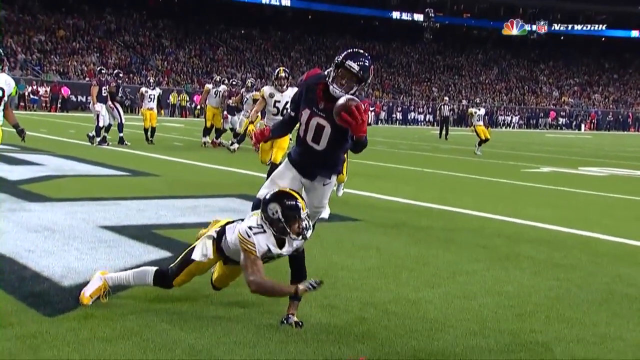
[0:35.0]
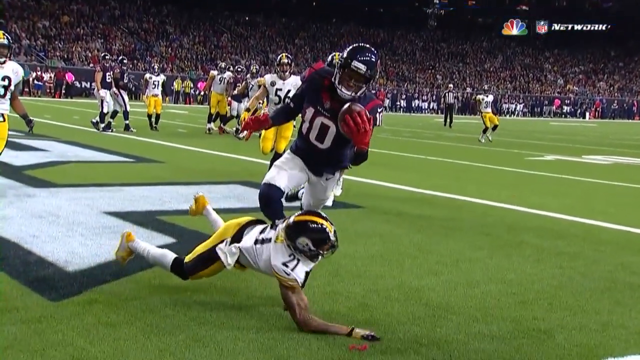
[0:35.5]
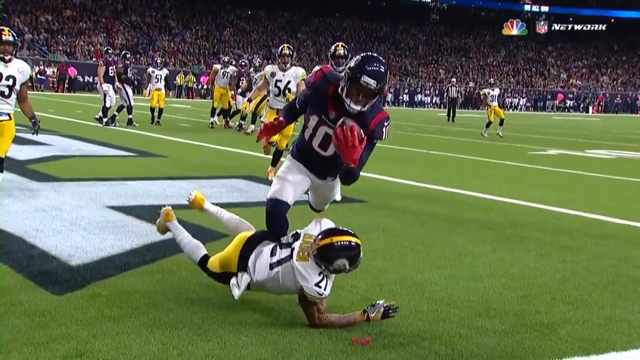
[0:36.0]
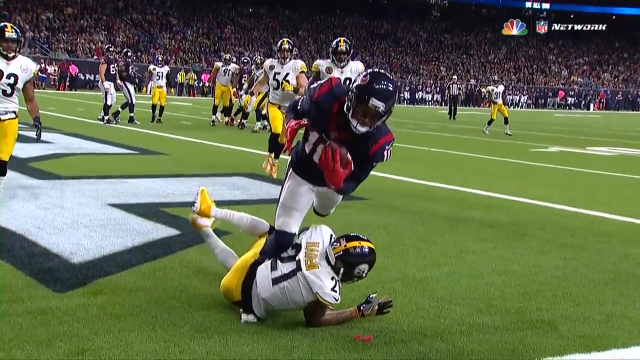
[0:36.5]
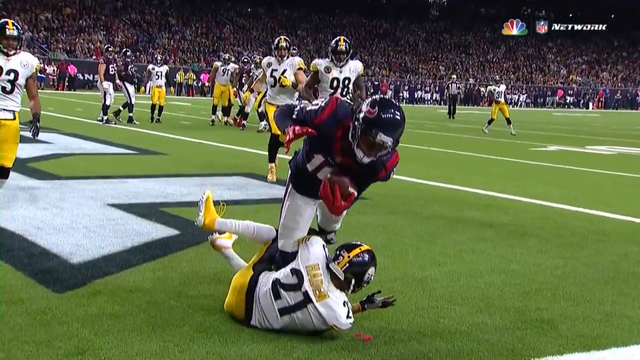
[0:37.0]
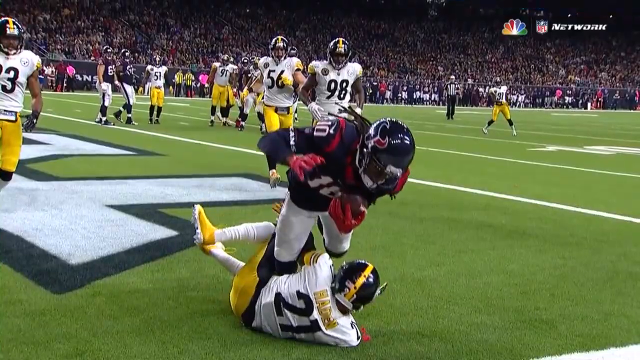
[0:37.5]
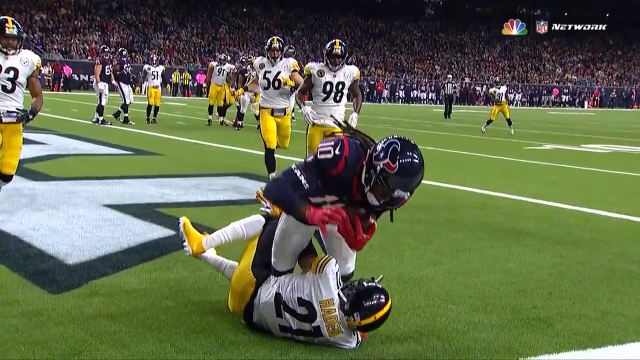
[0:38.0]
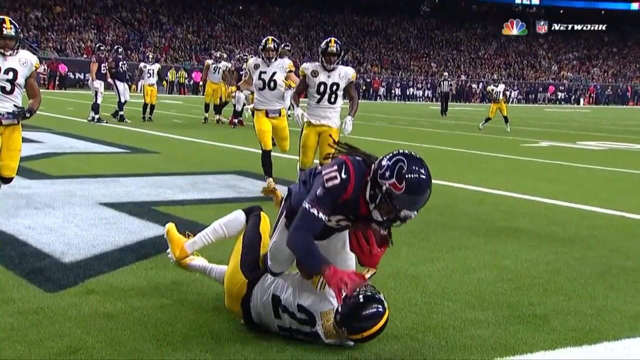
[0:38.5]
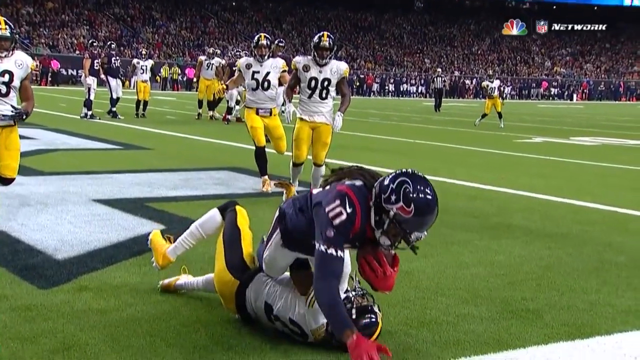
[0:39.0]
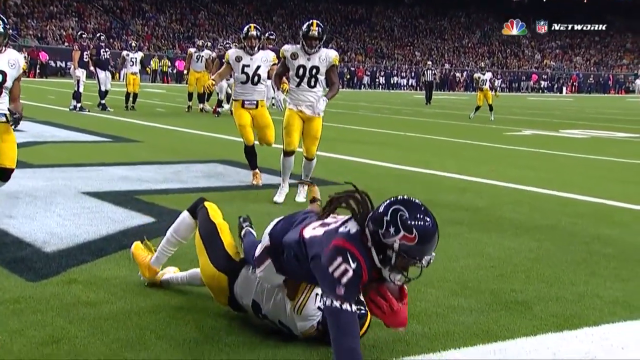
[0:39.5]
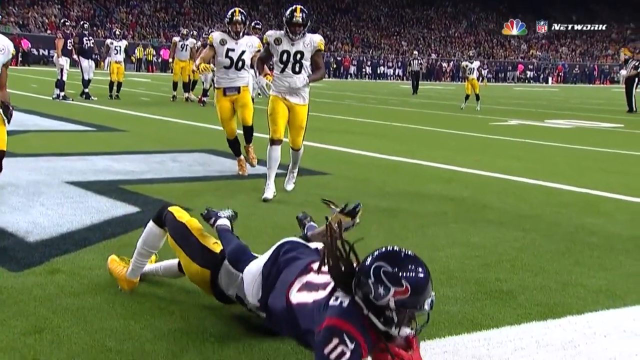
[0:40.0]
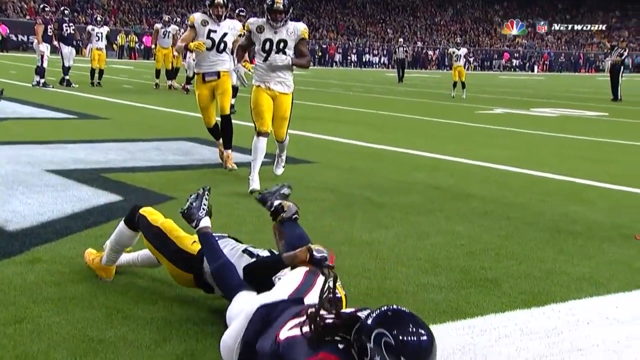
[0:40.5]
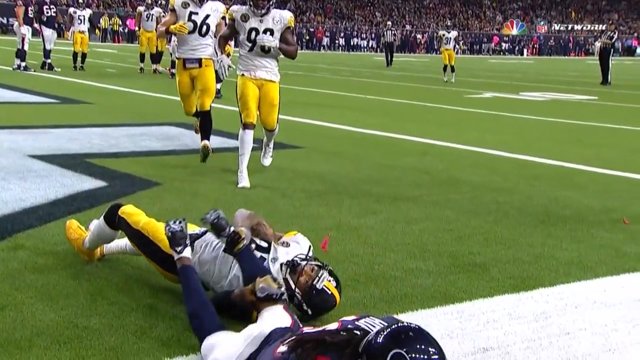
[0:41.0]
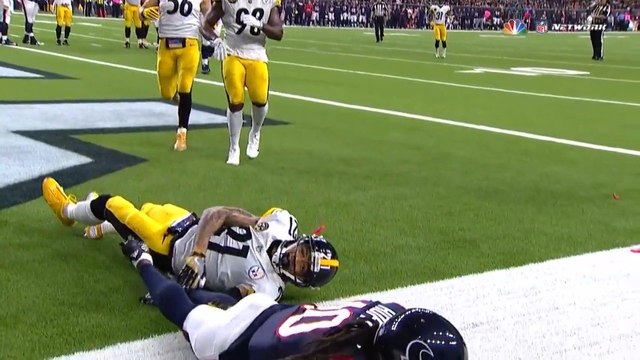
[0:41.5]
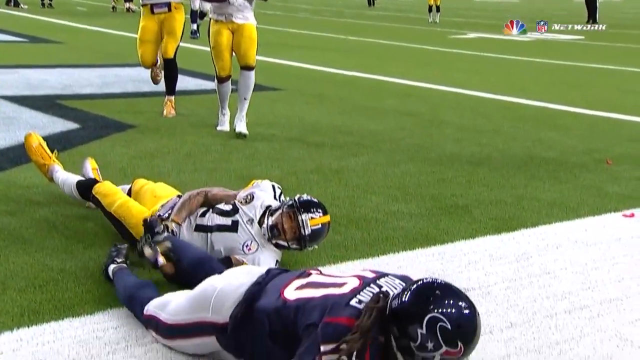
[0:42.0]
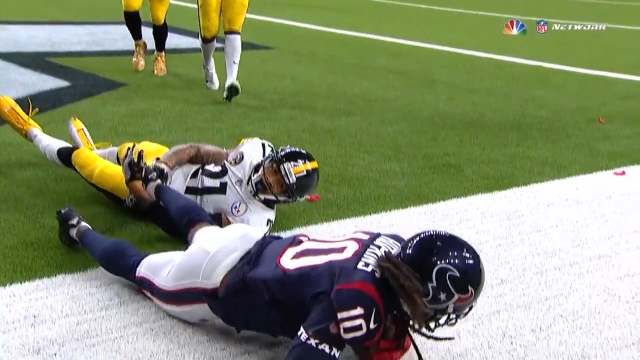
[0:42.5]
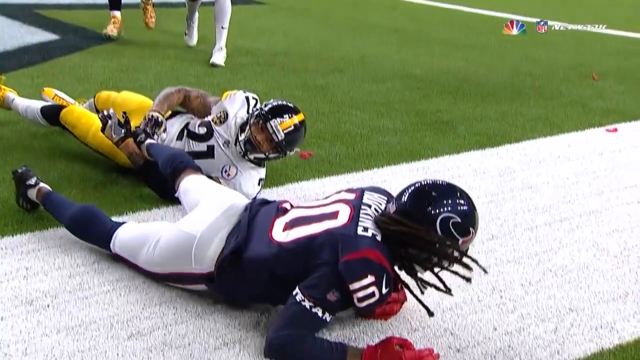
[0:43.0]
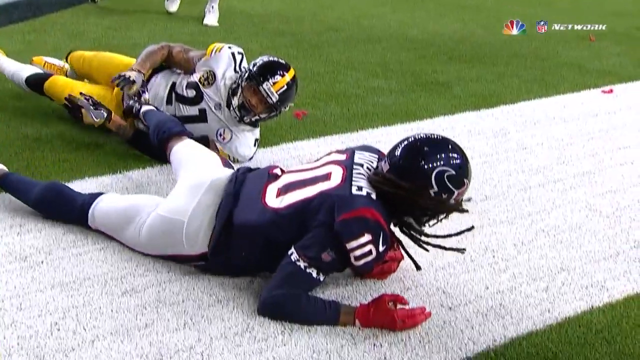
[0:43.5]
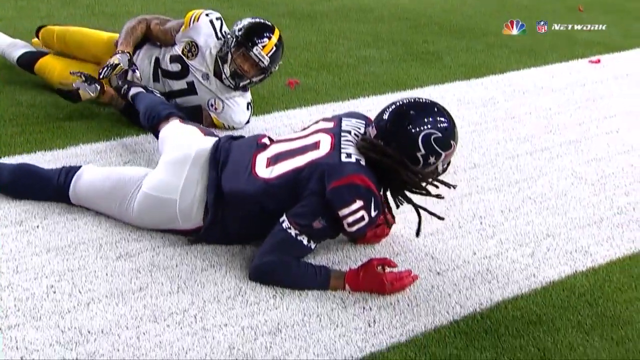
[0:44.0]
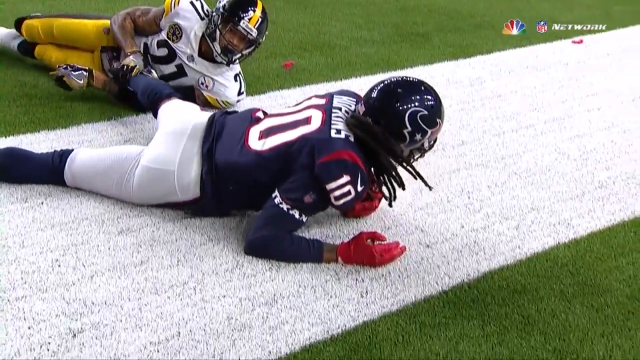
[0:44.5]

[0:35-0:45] A replay shows Hopkins as he comes down with the ball in his left hand, from an angle that shows whether he got inbounds as he gains possession. He lands with his shin on Joe Hayden's back, so he doesn't really touch down on the ground, and the first thing to touch out of bounds is his right hand while his legs are still on top of Hayden. In slow motion, as Hopkins gains possession with his left hand, his left leg is still in the air and his right leg is coming down on Hayden, who is underneath him on the ground. Hopkins is sort of falling forward, and both of his knees end up on Hayden's chest. His feet cannot really be seen, but it does not look like his legs ever touch down inbounds, and his hand touches out of bounds.